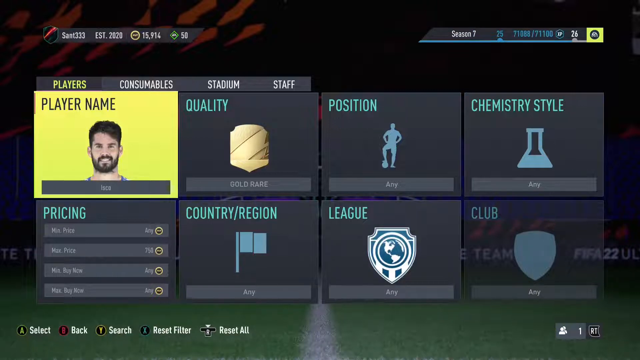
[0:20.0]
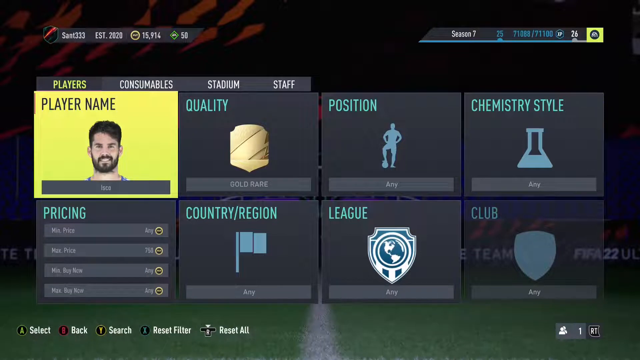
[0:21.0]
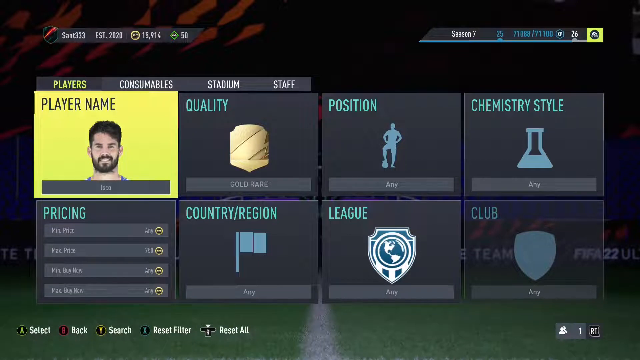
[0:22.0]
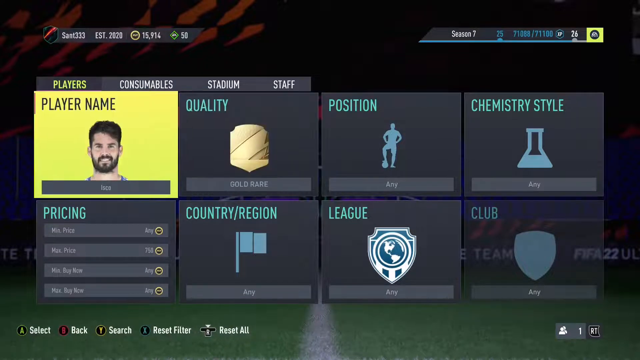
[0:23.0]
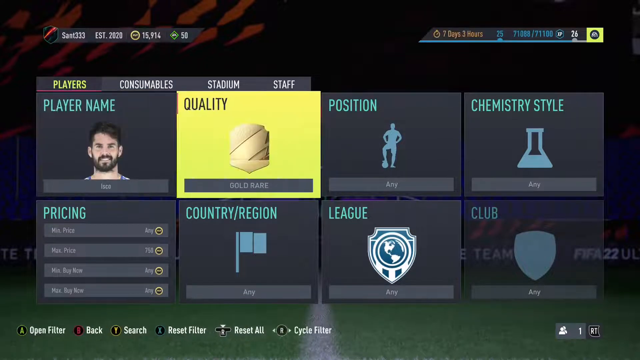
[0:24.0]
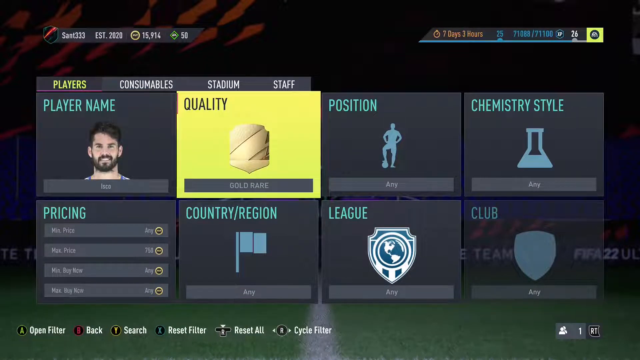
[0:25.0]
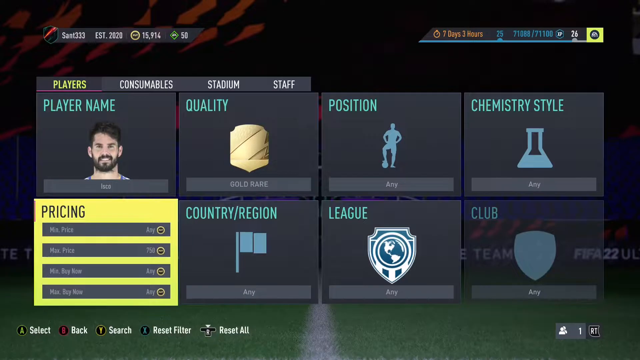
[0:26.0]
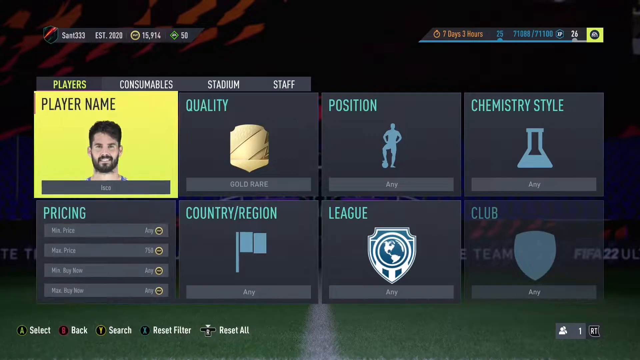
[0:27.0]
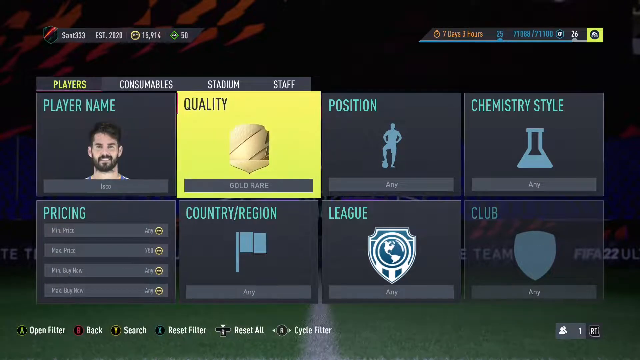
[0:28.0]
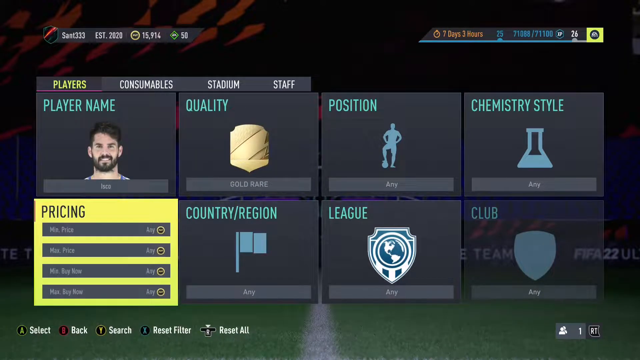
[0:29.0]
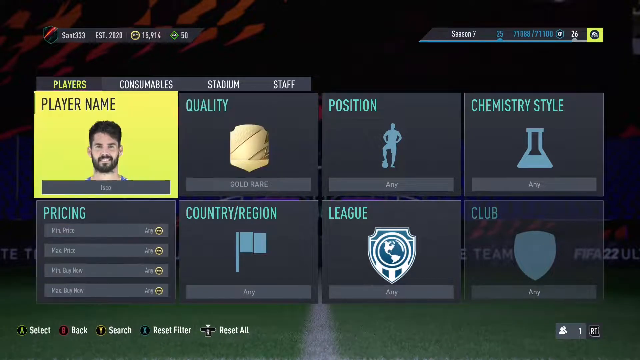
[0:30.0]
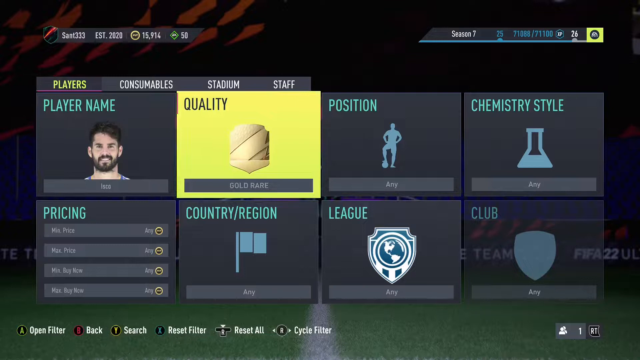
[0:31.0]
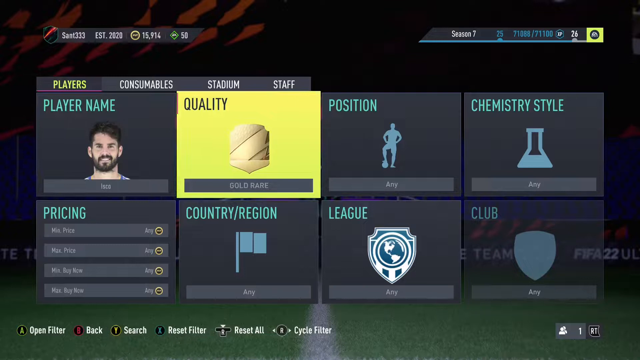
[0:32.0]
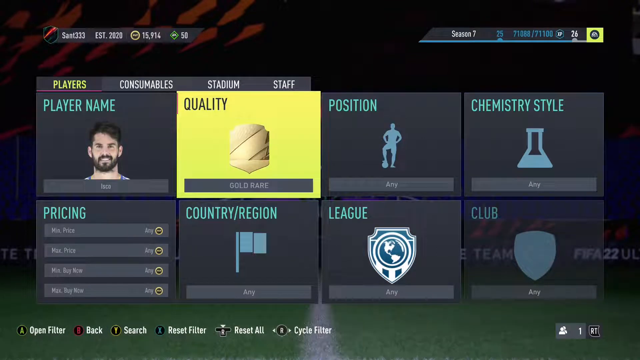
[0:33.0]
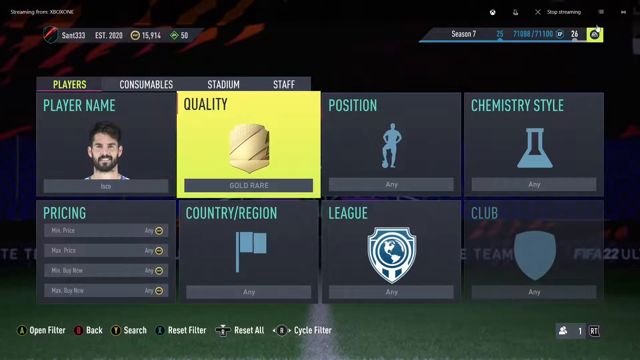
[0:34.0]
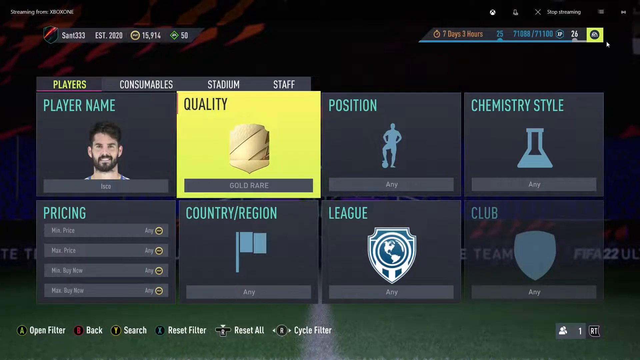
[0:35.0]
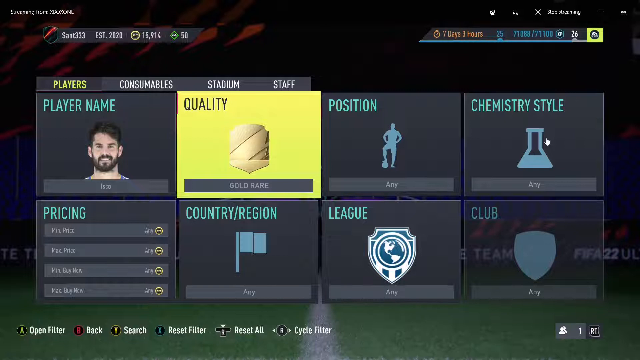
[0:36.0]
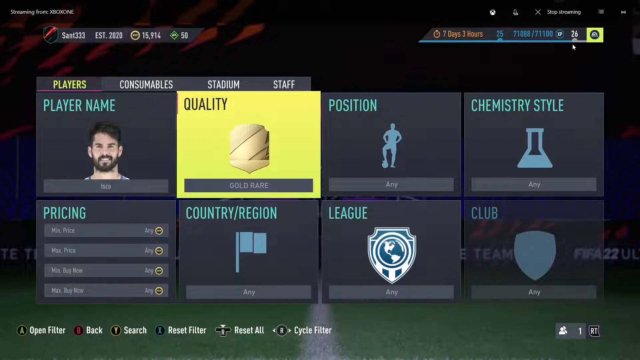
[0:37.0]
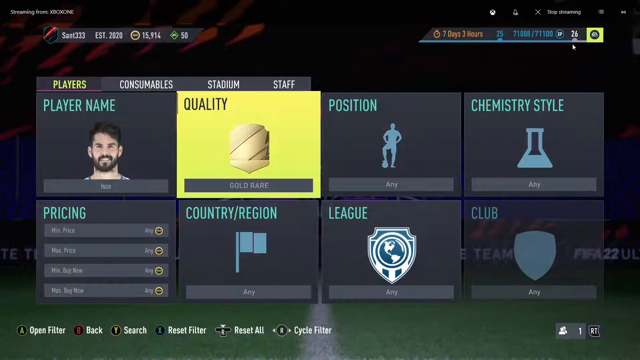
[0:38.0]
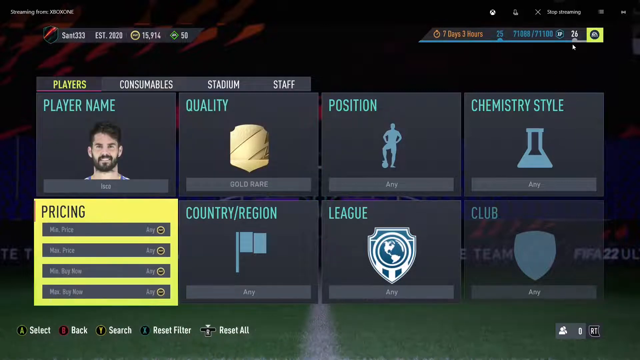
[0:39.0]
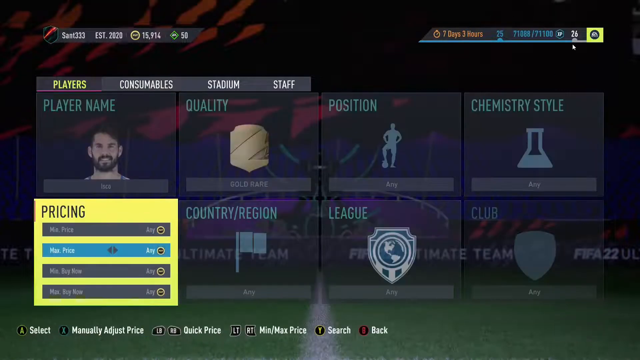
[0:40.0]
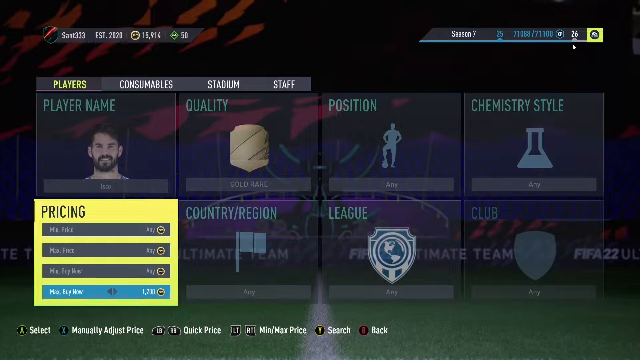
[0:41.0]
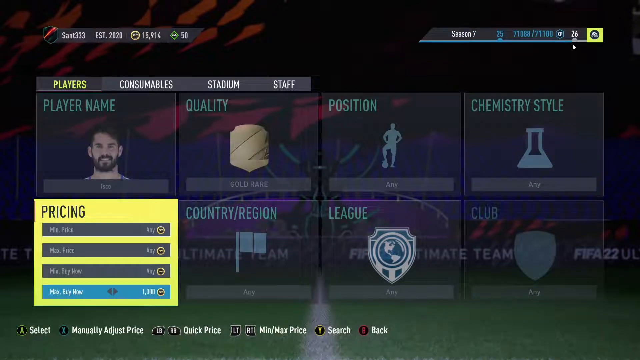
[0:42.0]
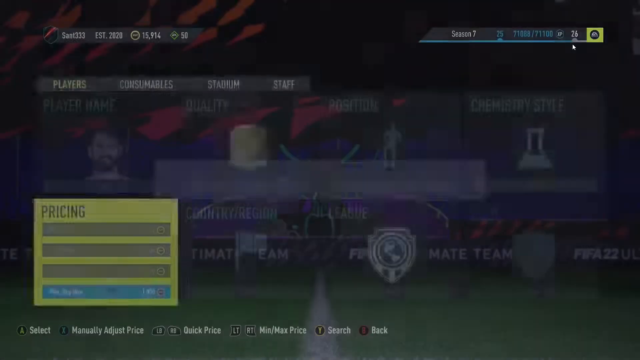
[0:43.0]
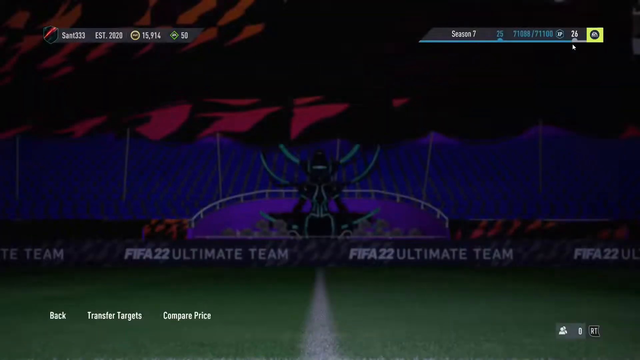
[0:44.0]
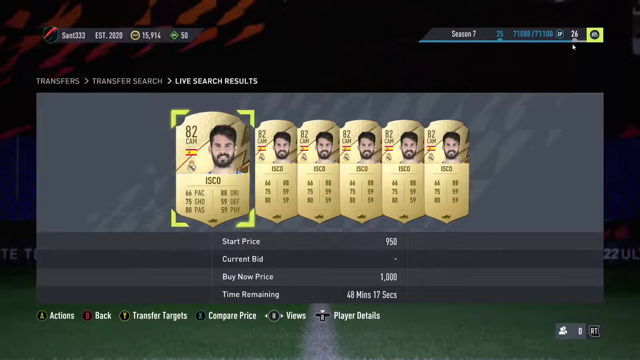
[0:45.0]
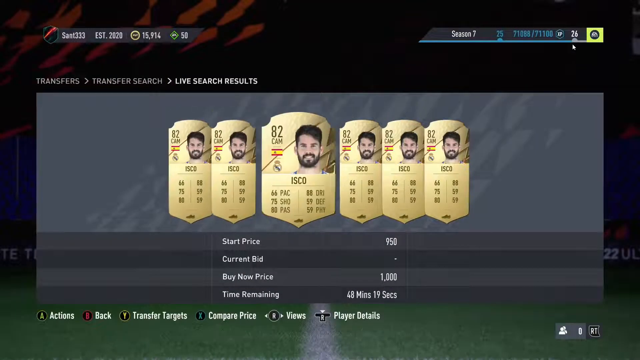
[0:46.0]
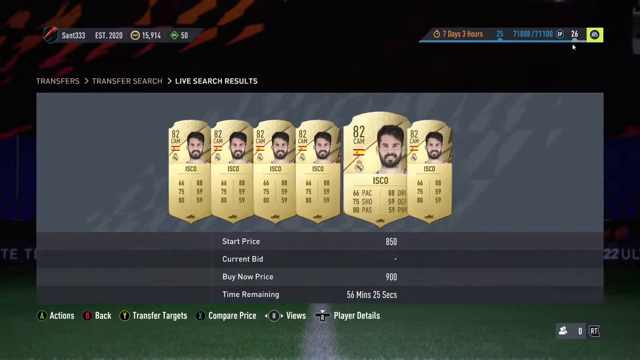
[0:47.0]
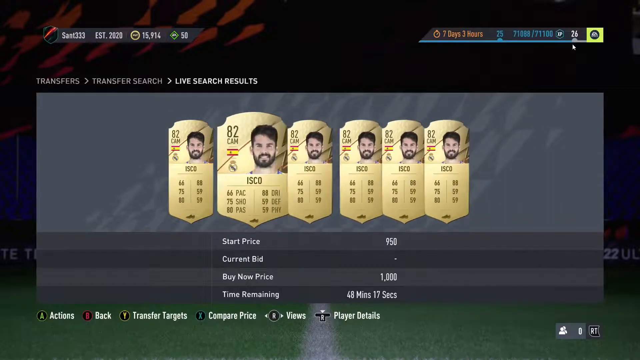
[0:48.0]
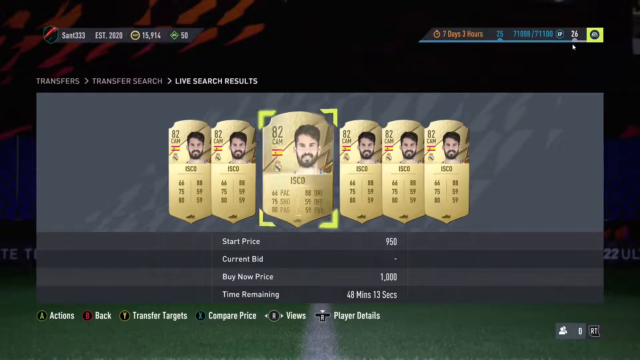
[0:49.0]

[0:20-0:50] The view is back at the menu. Player name is highlighted, then the selection briefly scrolls to the right and highlights quality. The selection appears to scroll down and around some of the options, then hovers over quality. Pricing is selected and apparently clicked, and a search is performed. More cards are displayed that appear to be the search results. These cards are all labeled "ISCO" and appear to carry one player's portrait, so the results seem to be for only one particular player. A starting price of 950, a buy now price of 1,000, and a time remaining of 48 minutes and 14 seconds are shown, so this appears to be an auction block for the trading cards.